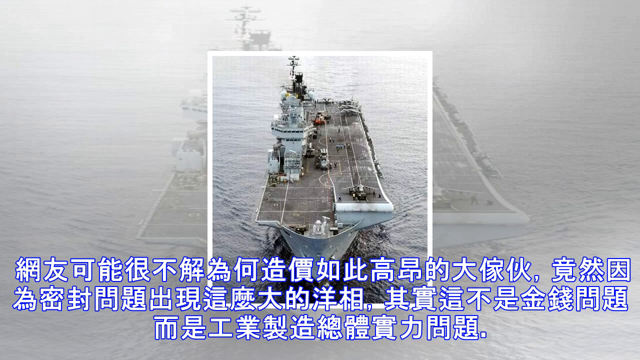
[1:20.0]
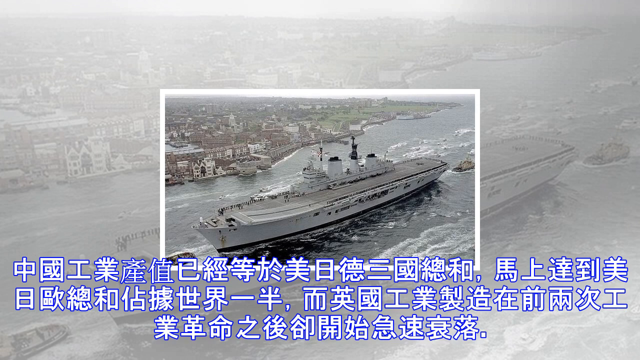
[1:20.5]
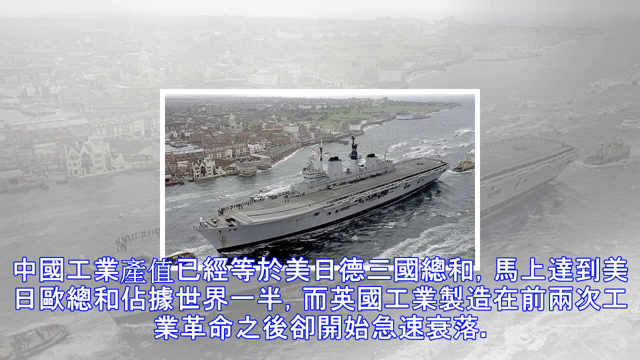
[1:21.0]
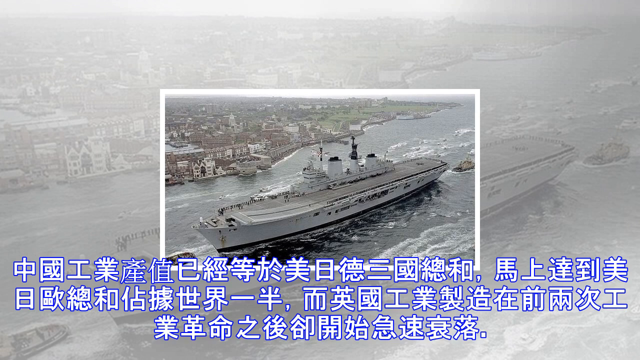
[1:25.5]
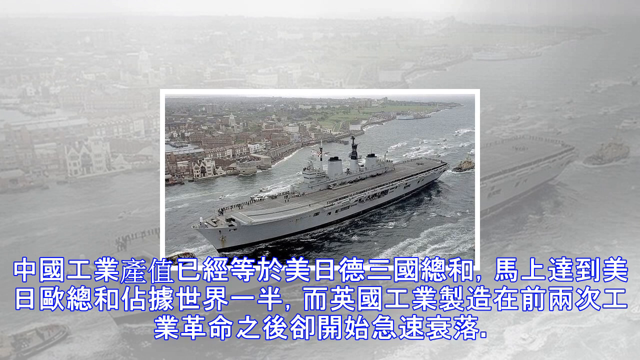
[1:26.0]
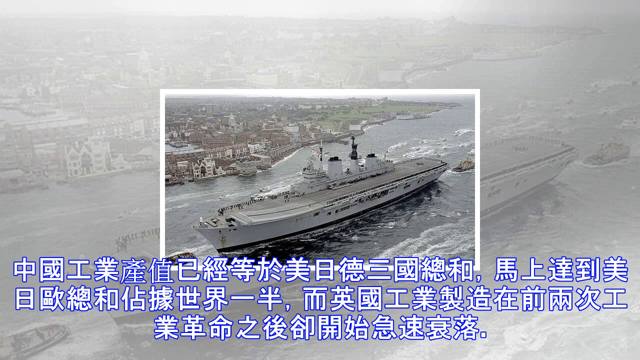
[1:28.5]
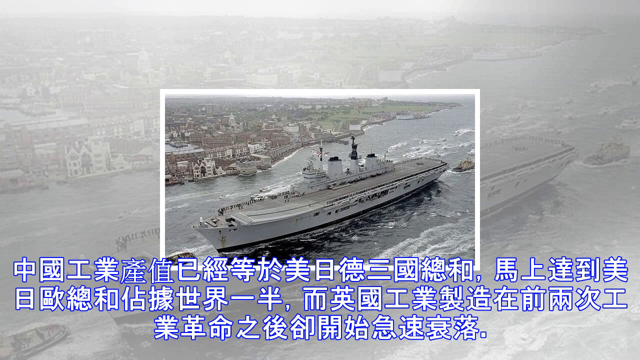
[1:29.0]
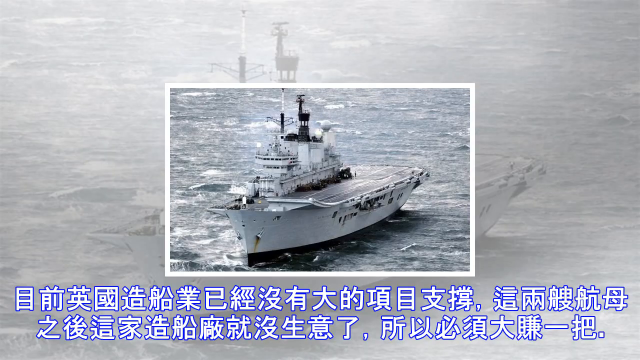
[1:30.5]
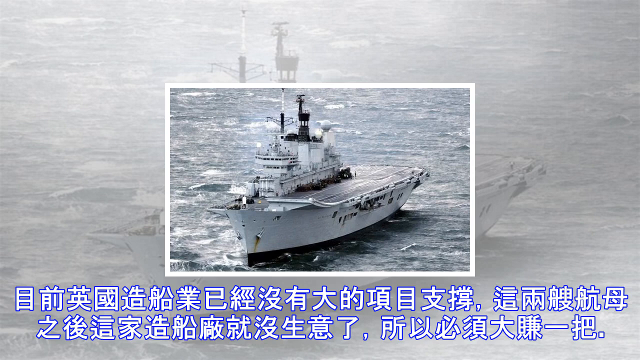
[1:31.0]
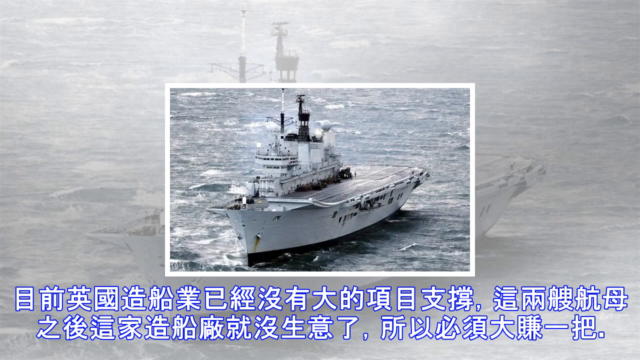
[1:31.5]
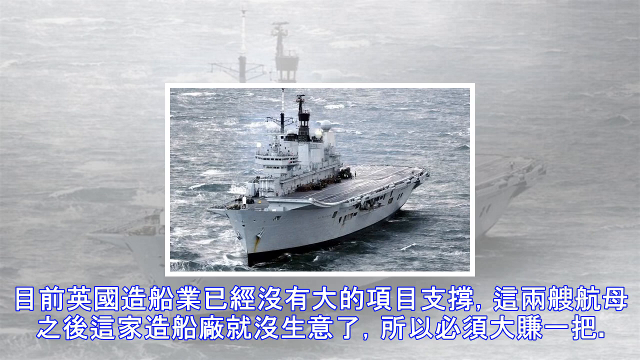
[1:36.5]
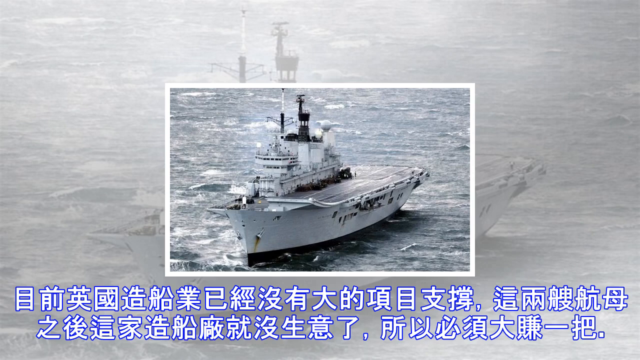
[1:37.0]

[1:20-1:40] A picture shown before appears again: the white vessel going next to a town or city in the ocean. There seem to be many people standing on the edge of the vessel. It has four other things on the side, one of them the control tower, and there are two smokestacks. There is a tugboat in the front and one in the back. In the town next to it, many buildings and homes are built on the ocean side, and there is green grass. The picture is outlined in a white square, and the area outside it is a little fuzzy. The next photo again shows the white vessel out in the middle of the ocean. It has many openings on the side, and the front shows rust in one of the holes. It has a tower for watching the arriving planes and a black smokestack.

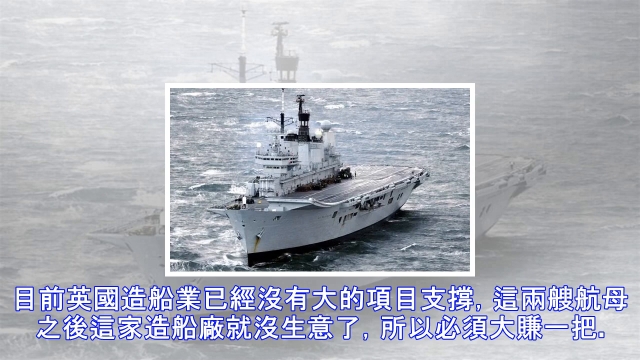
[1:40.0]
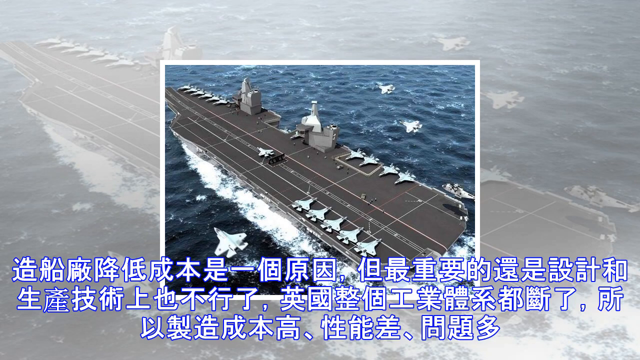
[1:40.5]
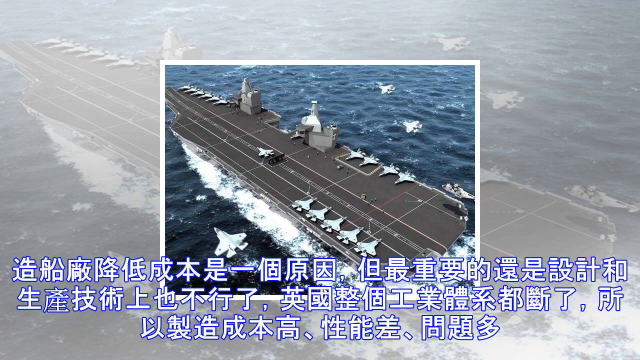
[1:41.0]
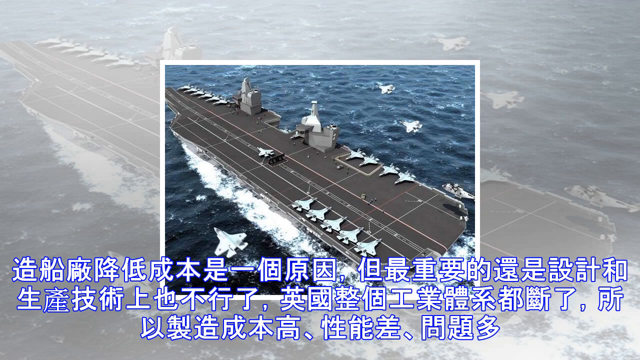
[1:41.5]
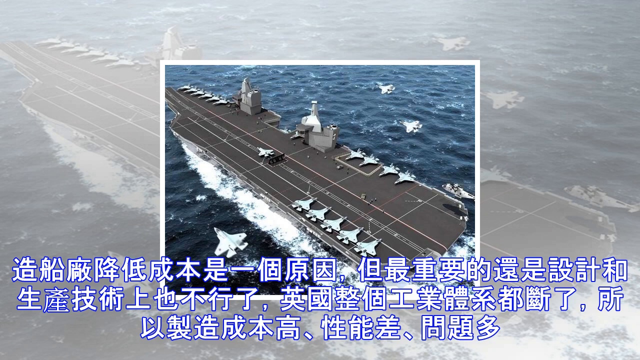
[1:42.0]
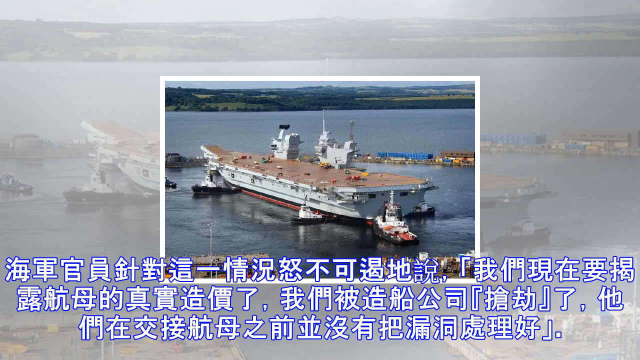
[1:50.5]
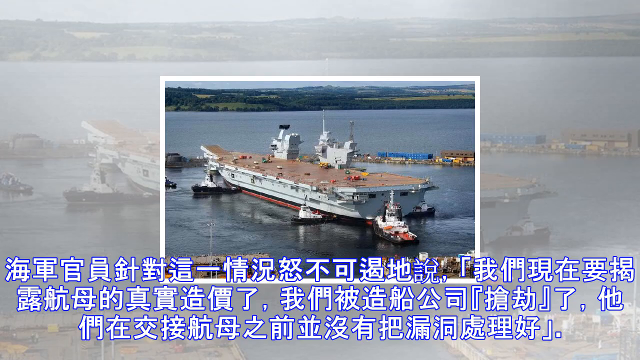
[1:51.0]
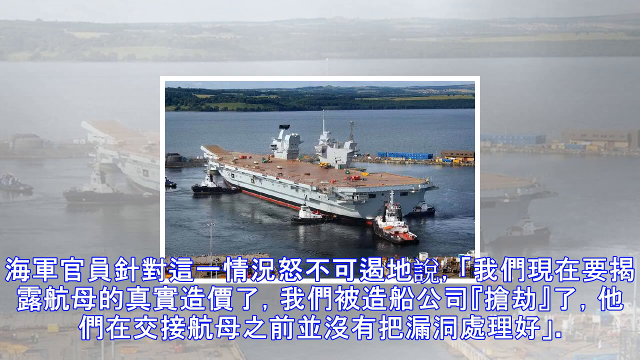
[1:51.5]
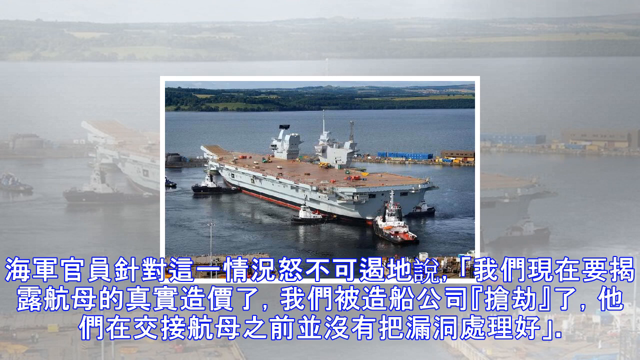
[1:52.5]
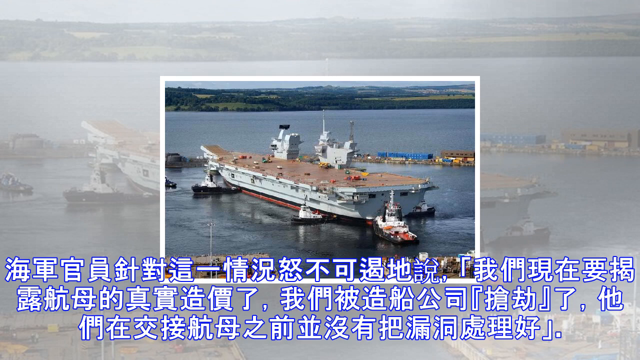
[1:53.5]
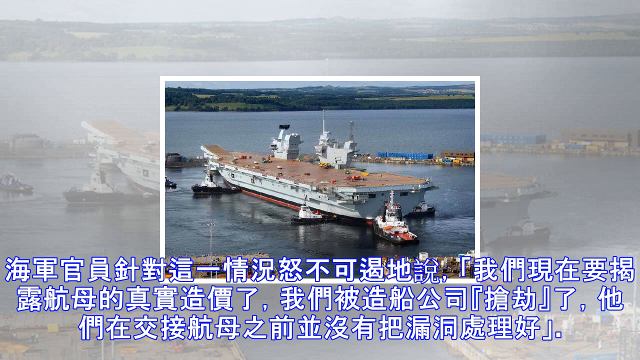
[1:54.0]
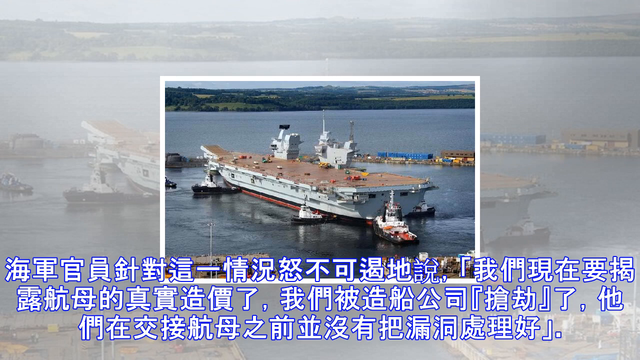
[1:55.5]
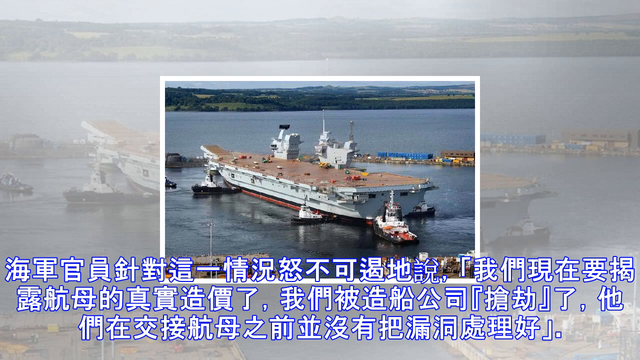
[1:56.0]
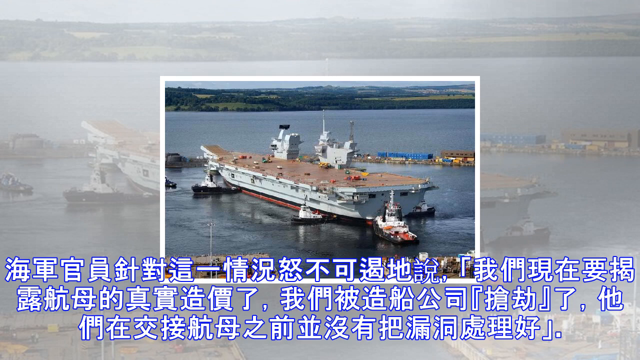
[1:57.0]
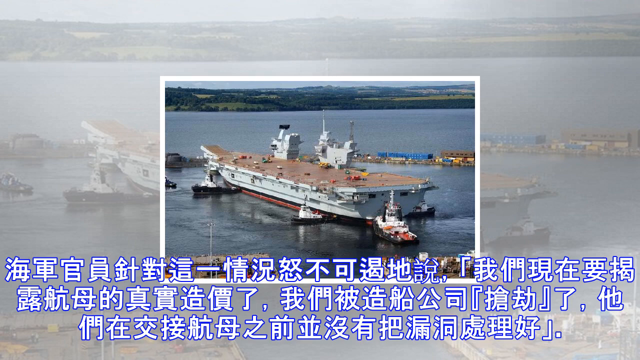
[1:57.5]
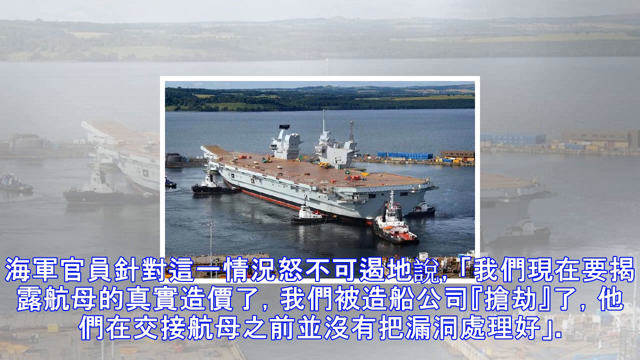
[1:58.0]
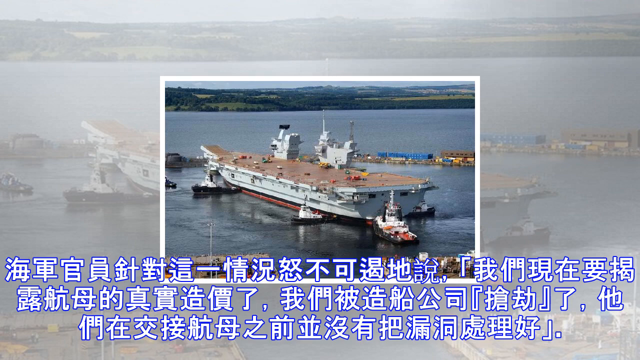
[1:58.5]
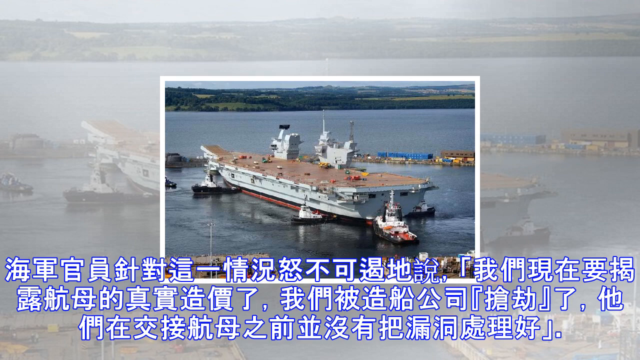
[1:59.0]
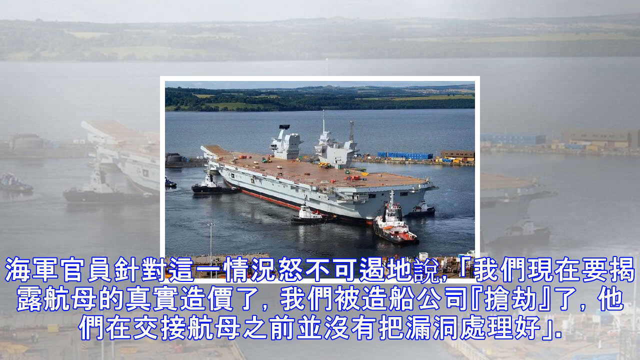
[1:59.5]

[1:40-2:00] A picture seen before shows a white or tan vessel out in the middle of the ocean, with numerous cutouts on its side. A helicopter is flying above the vessel. There is a flight tower with numerous windows on the left side of the vessel, and numerous antennas above the tower. The ocean is blue. The next picture is again a vessel seen before, with numerous fighter jets on the landing strip area: six white fighter jets in front, four more towards the middle, and five parked across from those. One is in the ready position to take off, and a white fighter jet is flying next to the vessel. The top of the vessel is mainly dark gray with numerous white lines running horizontally and vertically, and there is a small flight tower on the front and also in the middle. The video goes back to the picture of the white vessel in the town, with numerous tugboats around it. In the background are green hills and grass, and there are numerous small buildings in the island area.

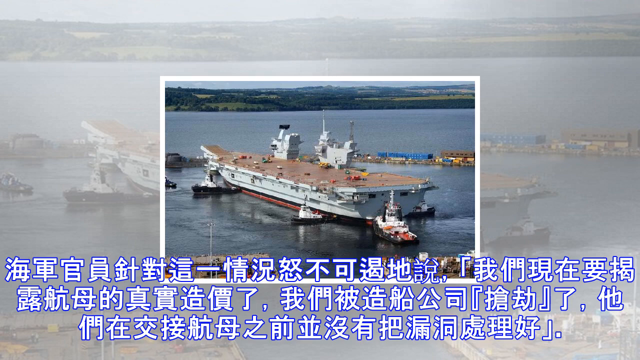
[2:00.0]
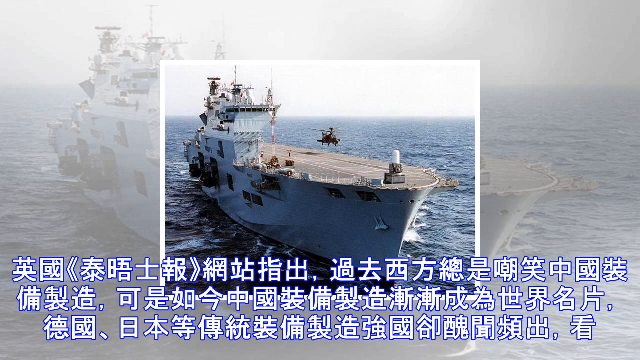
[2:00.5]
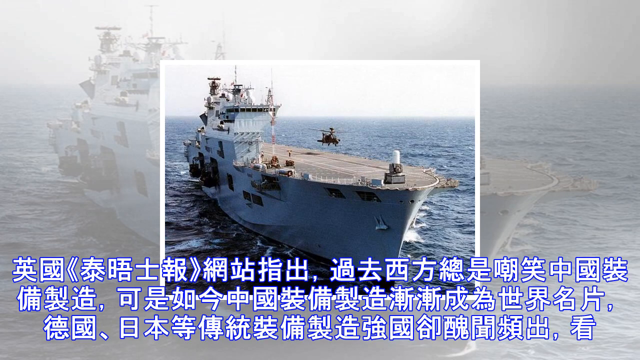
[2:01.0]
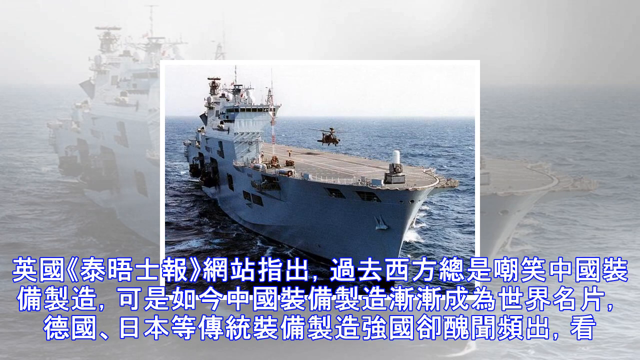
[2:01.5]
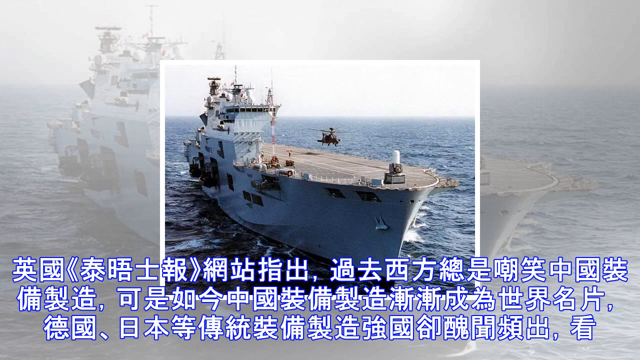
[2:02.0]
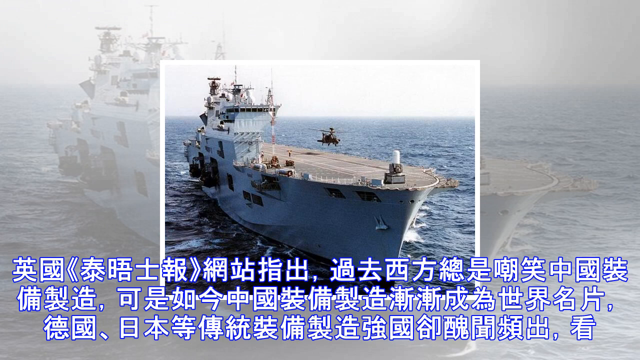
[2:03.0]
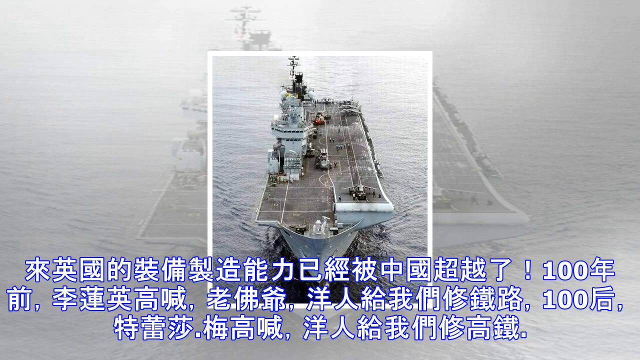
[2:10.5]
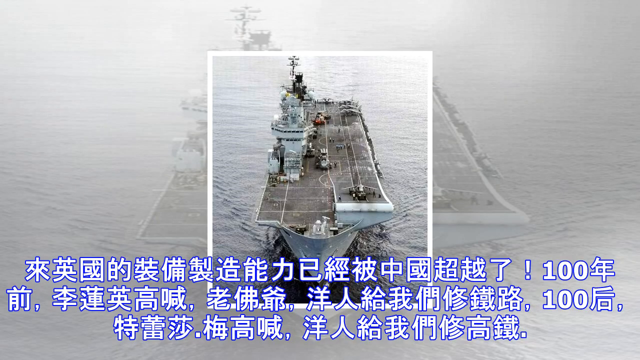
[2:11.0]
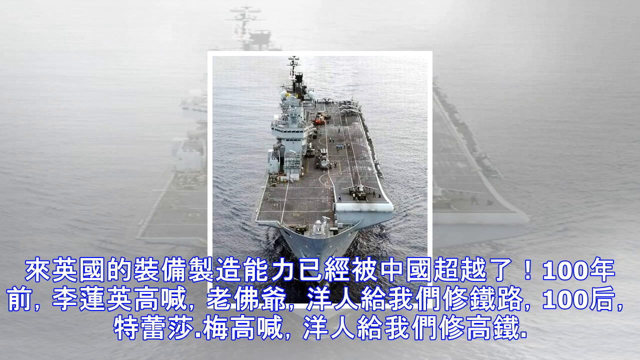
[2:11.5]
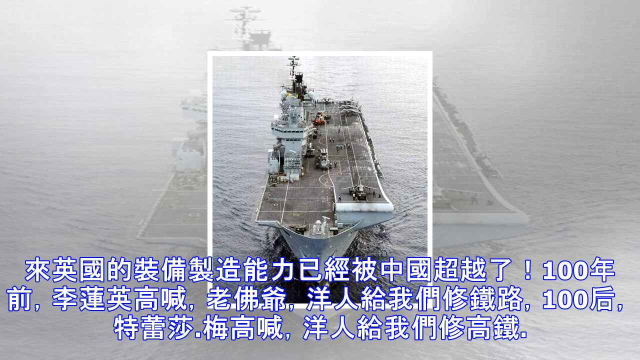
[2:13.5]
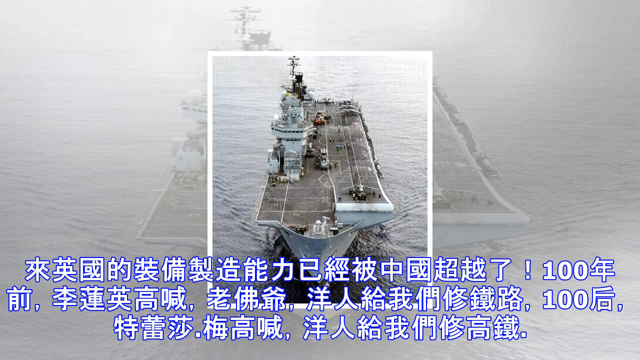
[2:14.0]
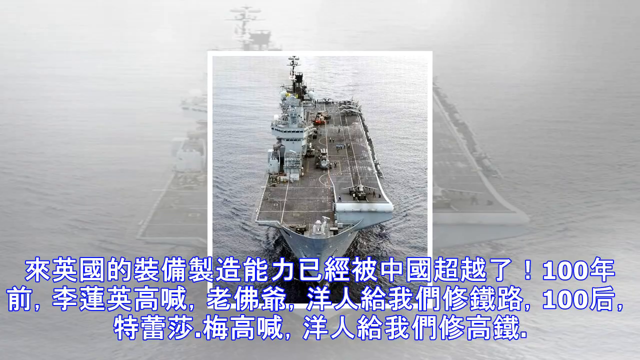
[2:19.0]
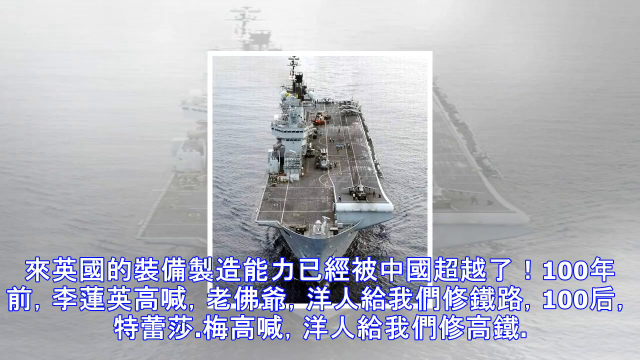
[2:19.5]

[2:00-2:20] The same pictures continue to be shown. A white vessel has a flight tower on the left-hand side, with numerous windows wrapping around it, and two antennas on top. A helicopter is flying right above the area where the planes land. In front is a white tube going up the front. The next picture again shows a gray or white vessel with planes landing and taking off. On the right-hand side is a plane ready to take off, with numerous people on the ground looking at it. In the middle of the vessel, people are walking around, and there are a couple of motorized vehicles for moving the planes. There is also a tower with numerous windows and a few antennas. The next picture again shows a vessel out in the water.